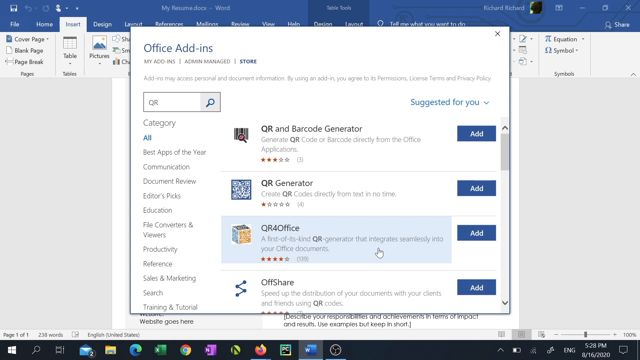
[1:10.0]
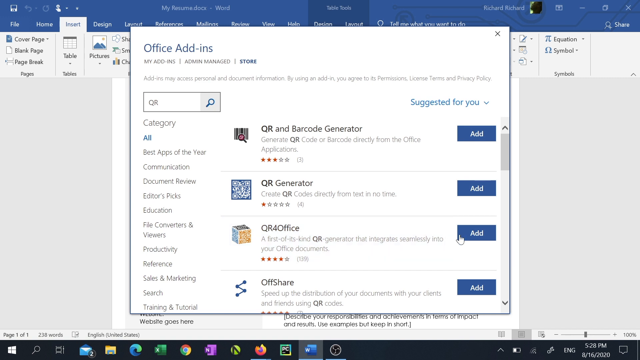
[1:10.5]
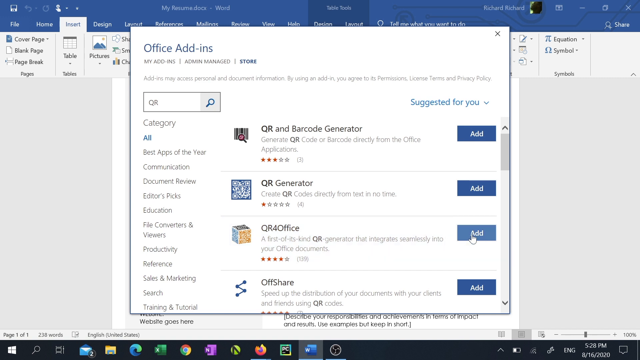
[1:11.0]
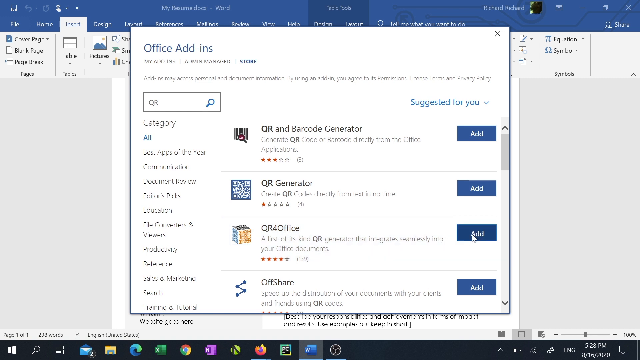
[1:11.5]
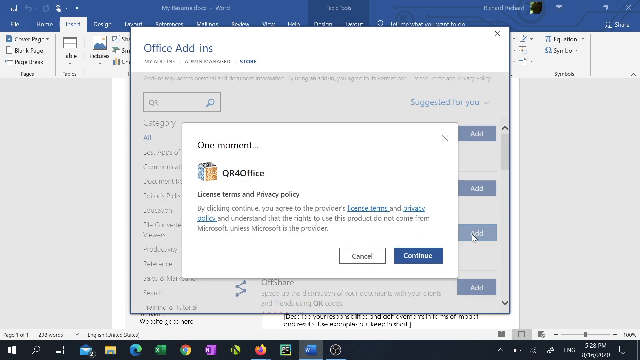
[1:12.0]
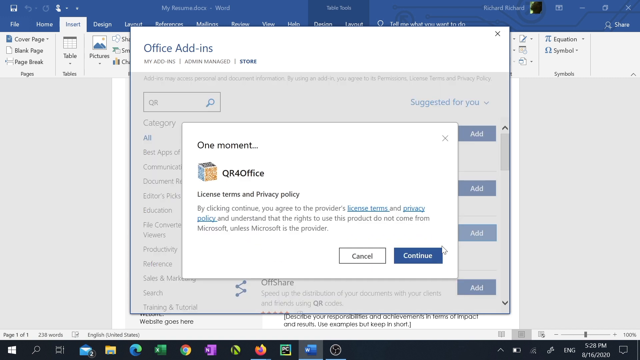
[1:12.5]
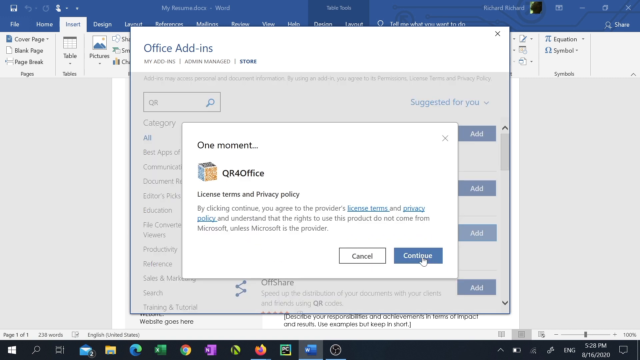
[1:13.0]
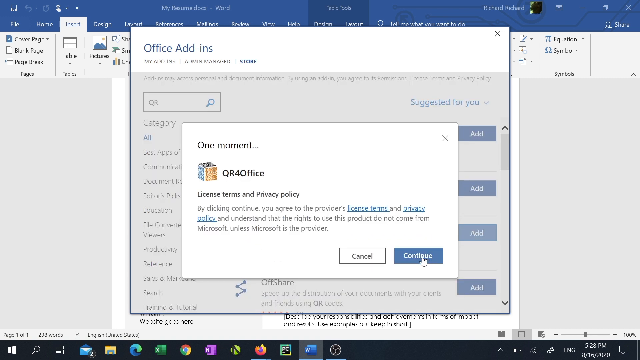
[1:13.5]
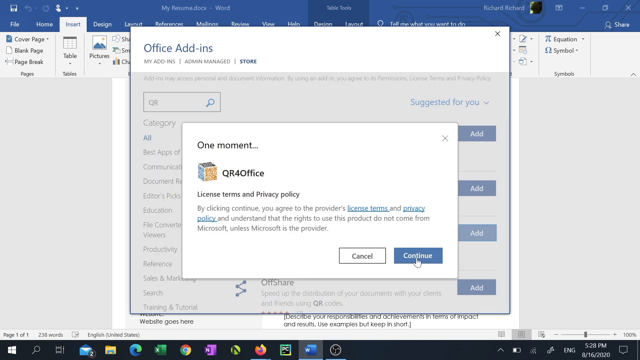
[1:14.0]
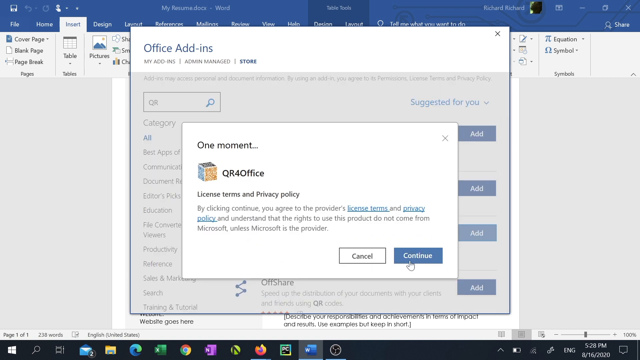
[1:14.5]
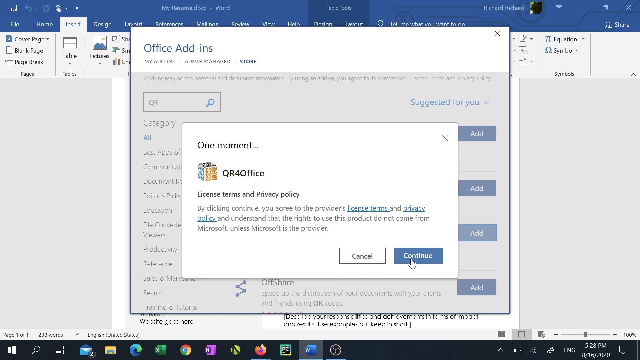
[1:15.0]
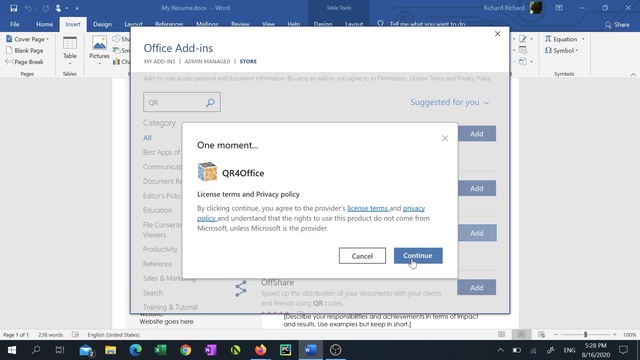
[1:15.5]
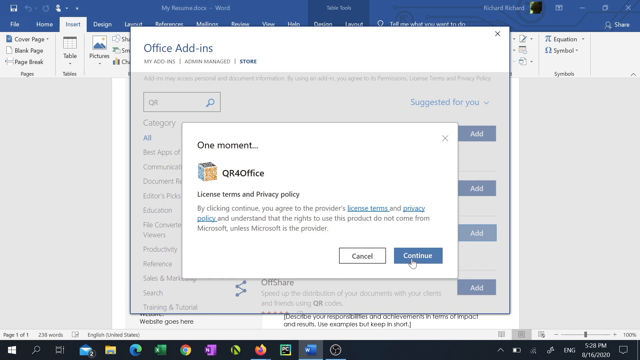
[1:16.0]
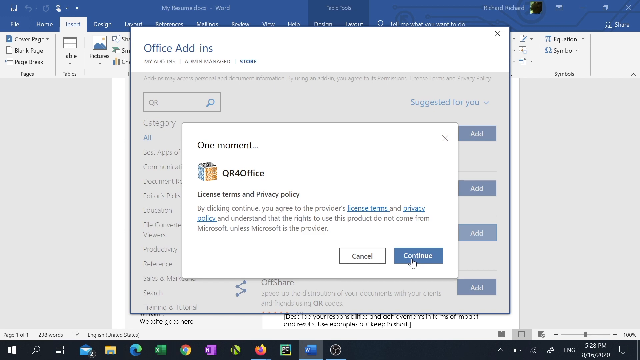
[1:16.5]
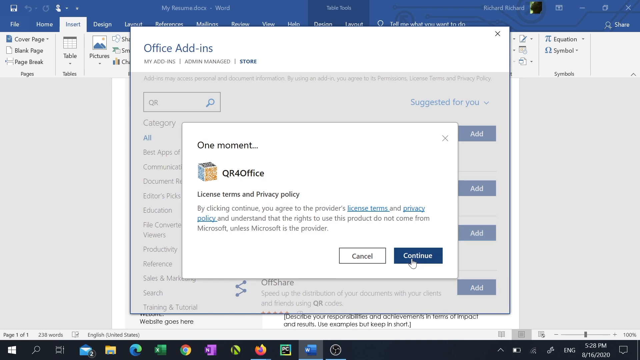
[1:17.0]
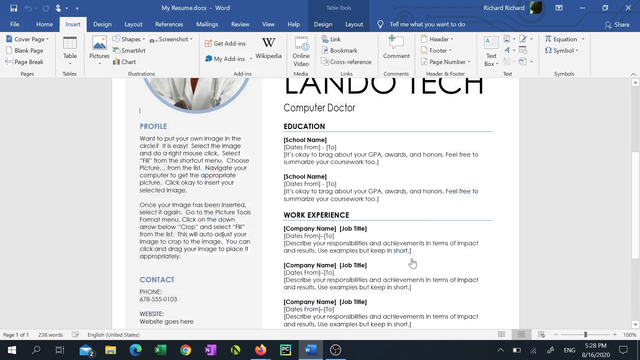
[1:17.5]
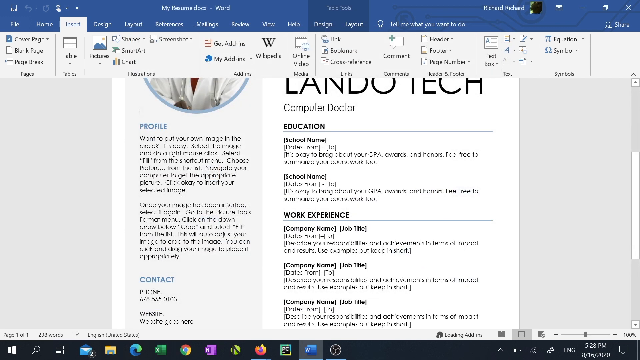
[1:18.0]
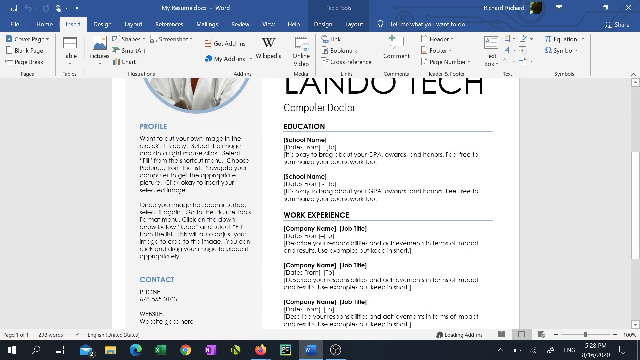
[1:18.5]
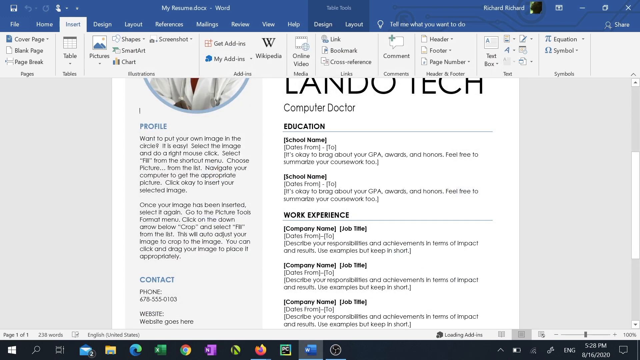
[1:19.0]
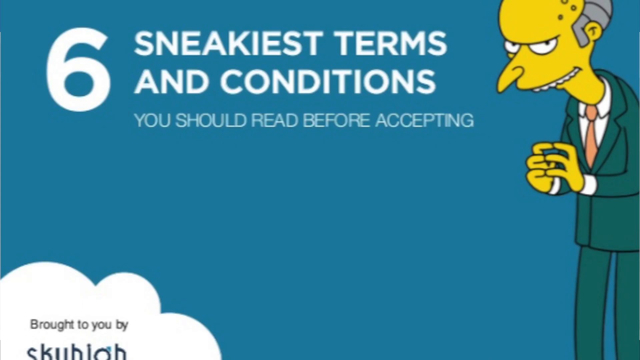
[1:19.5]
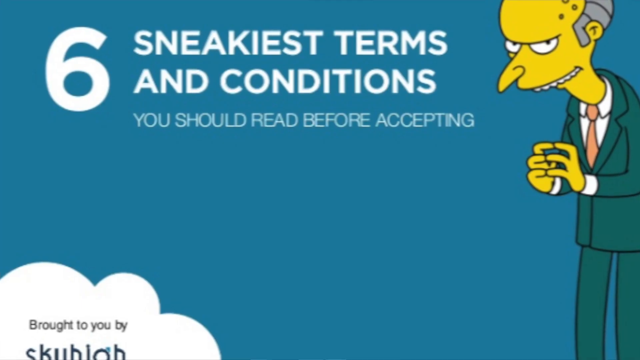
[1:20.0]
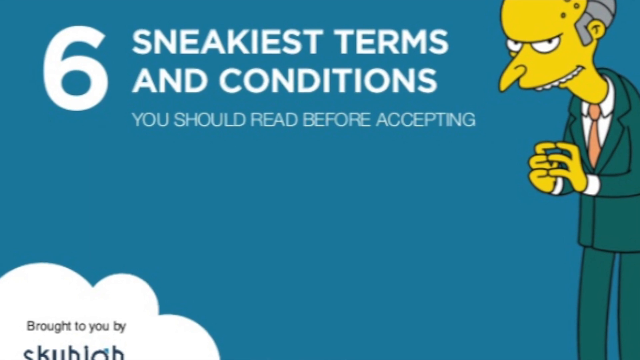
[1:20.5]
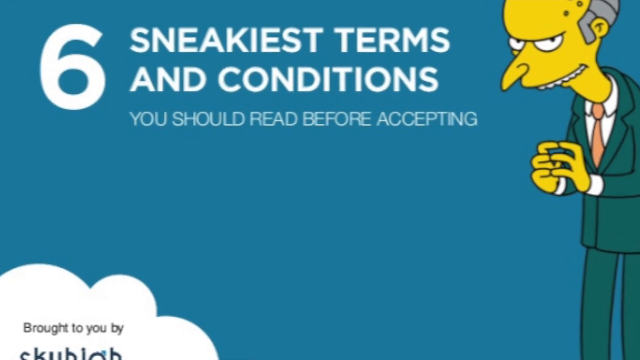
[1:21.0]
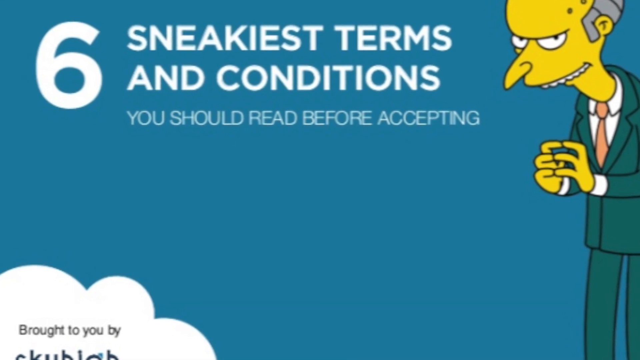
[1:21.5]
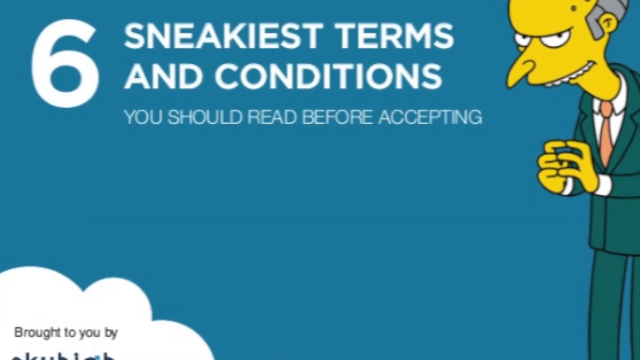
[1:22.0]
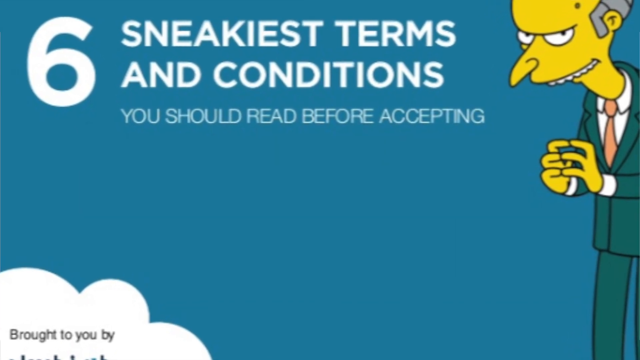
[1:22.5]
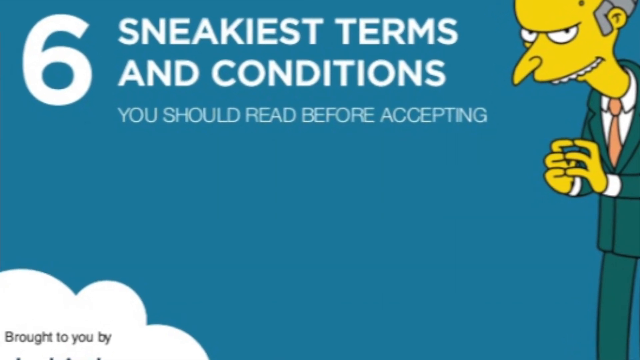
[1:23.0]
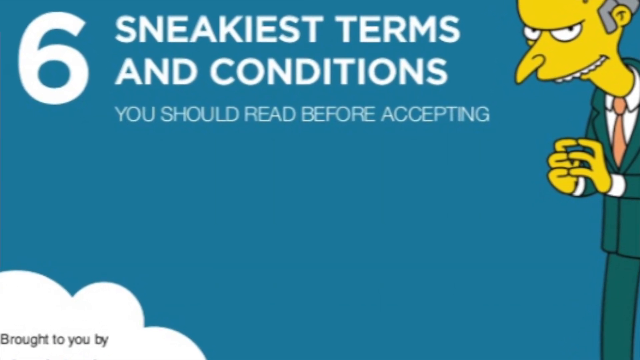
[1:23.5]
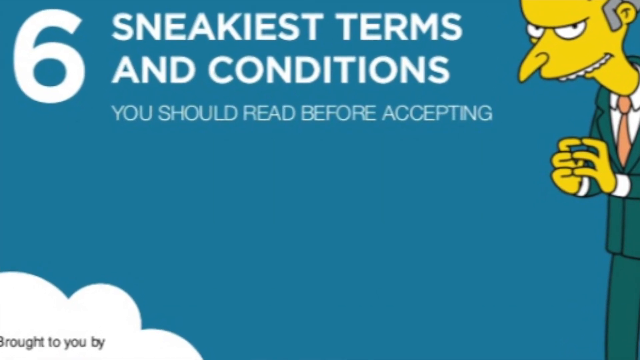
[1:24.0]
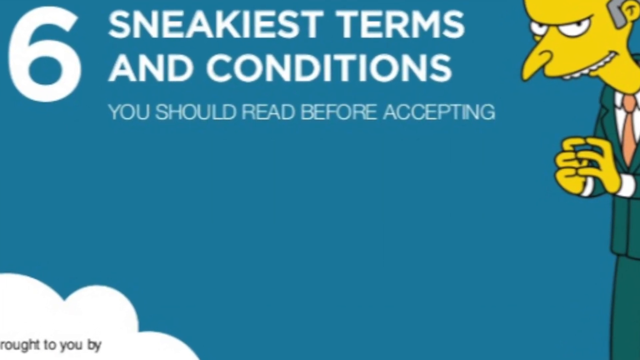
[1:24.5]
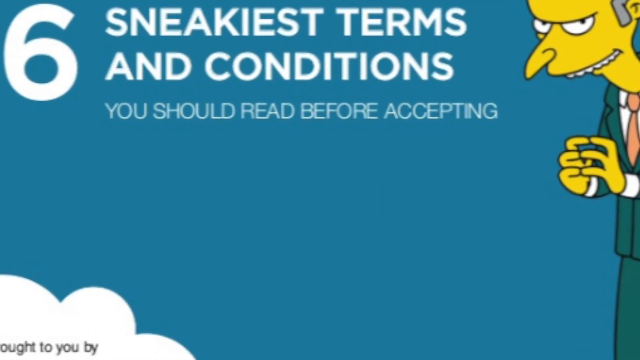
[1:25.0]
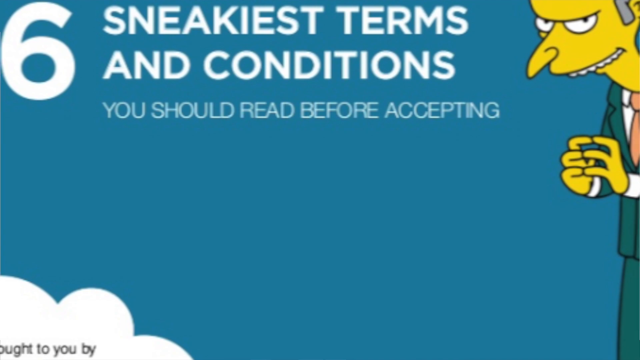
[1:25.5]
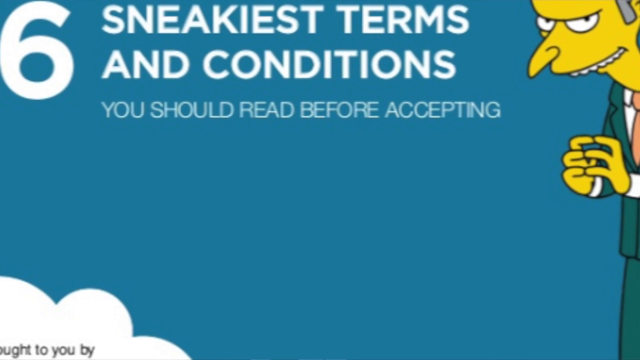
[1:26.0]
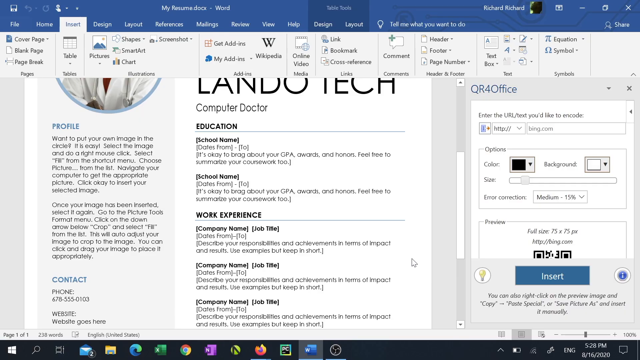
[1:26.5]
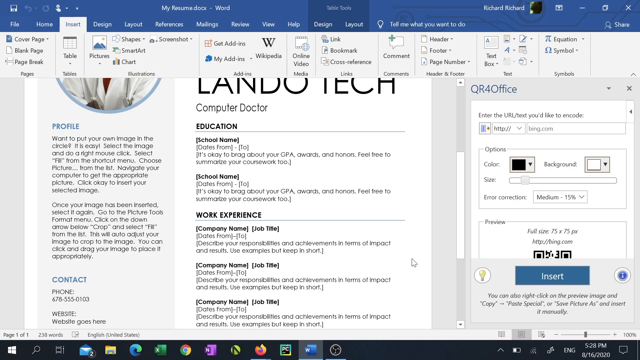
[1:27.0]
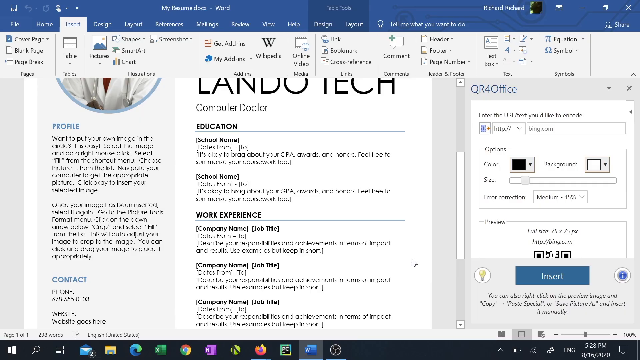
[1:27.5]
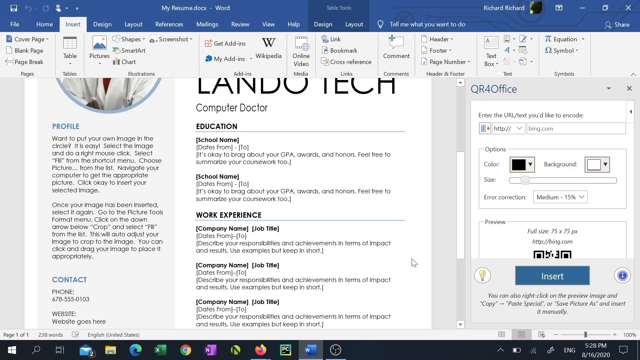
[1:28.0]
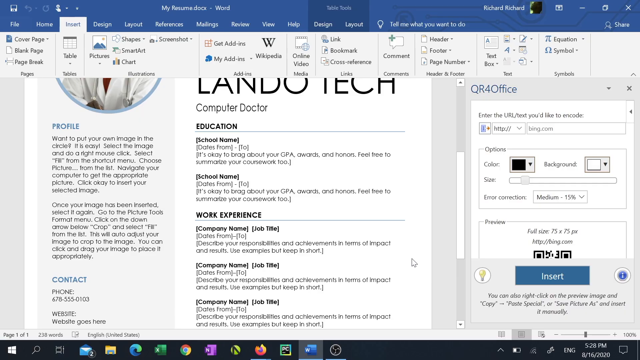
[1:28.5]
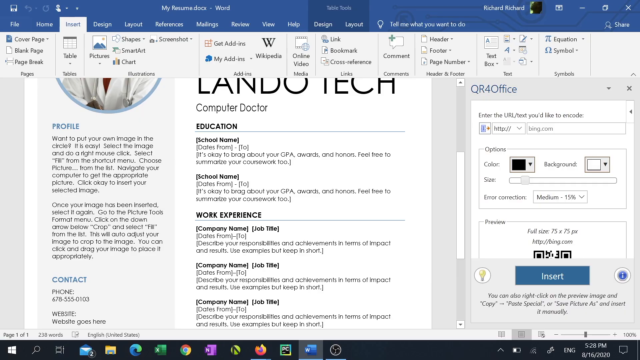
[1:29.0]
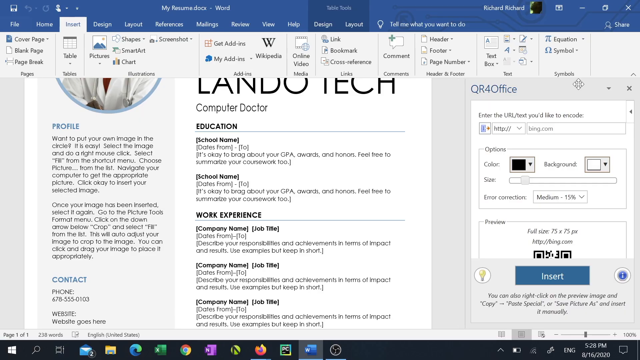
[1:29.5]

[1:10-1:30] Microsoft Office shows a screen titled "Office Add-ins", where a person selects one of the listed apps. Visible at the top are "QR and barcode generator", "QR generator" and "QR office", and the cursor, a pointing-finger pointer, hovers over QR office. It then moves to a small rectangle on the right labeled "add" and clicks it. A new screen pops up that says "one moment QR for office" with "license terms and privacy policy" and a lot of privacy policy text; at the bottom of this box are rectangles labeled "cancel" and "continue". The pointer moves to continue, makes a couple of circles and clicks it. The Lando Tech office document returns, with "Lando Tech" in the top right and, in the top left, the image of a black man in a lab coat with a stethoscope around his neck. Suddenly the screen changes to Mr. Burns from the Simpsons on the right side, putting his fingers together and looking sinisterly at the viewer, with a cloud in the bottom left corner and text at the top reading "six sneakiest terms and conditions you should read before accepting". The camera zooms in and keeps zooming in.